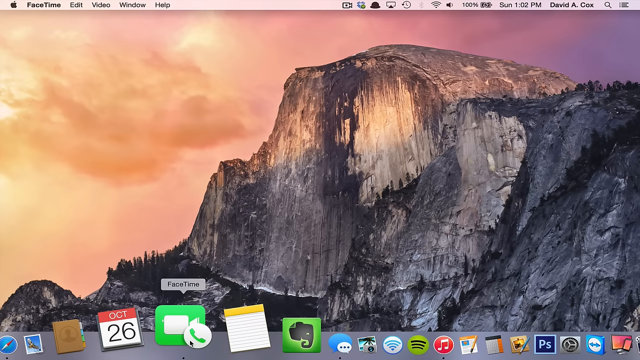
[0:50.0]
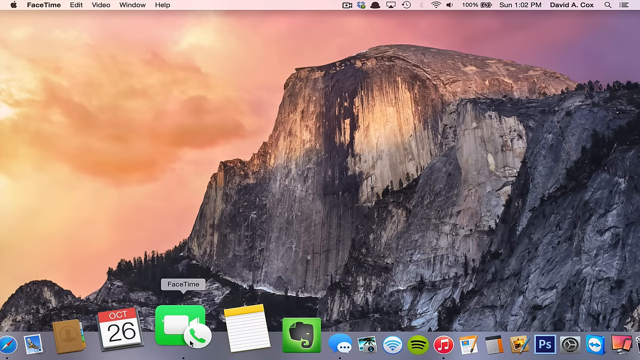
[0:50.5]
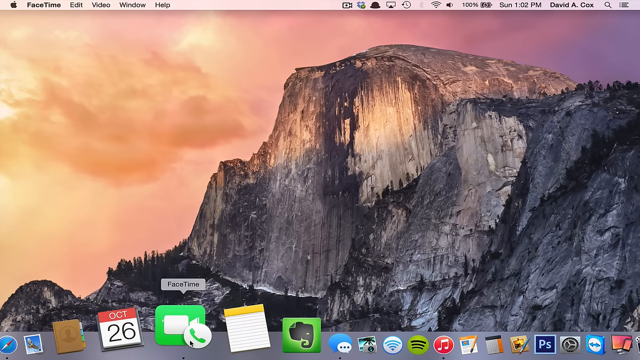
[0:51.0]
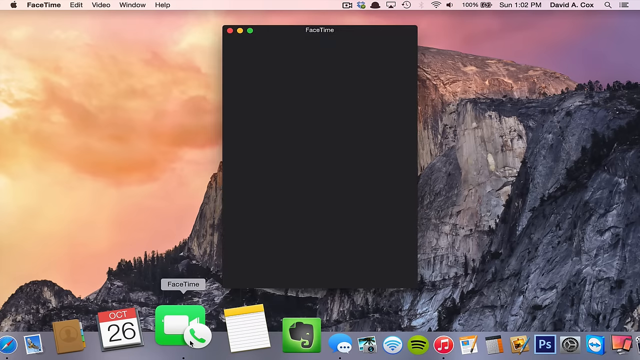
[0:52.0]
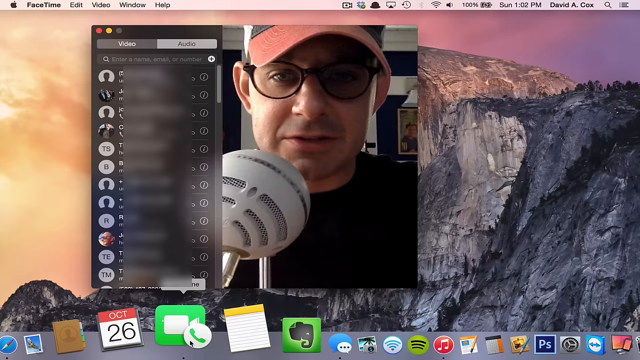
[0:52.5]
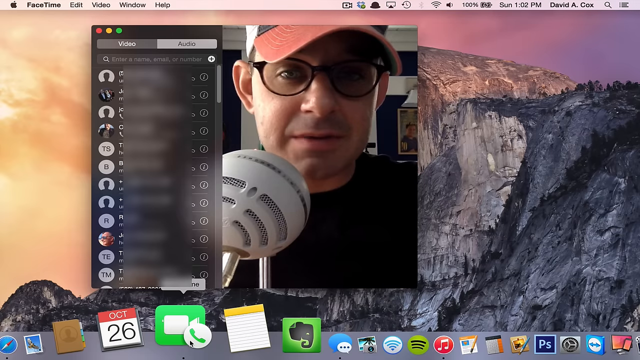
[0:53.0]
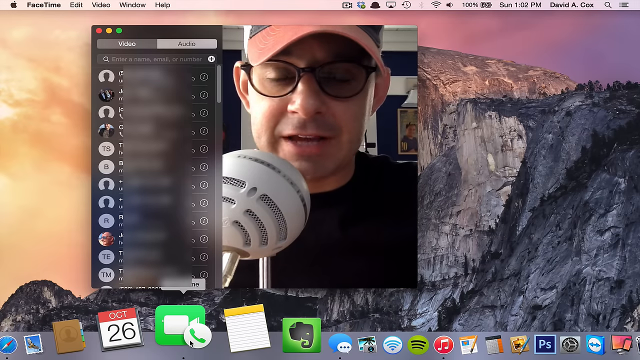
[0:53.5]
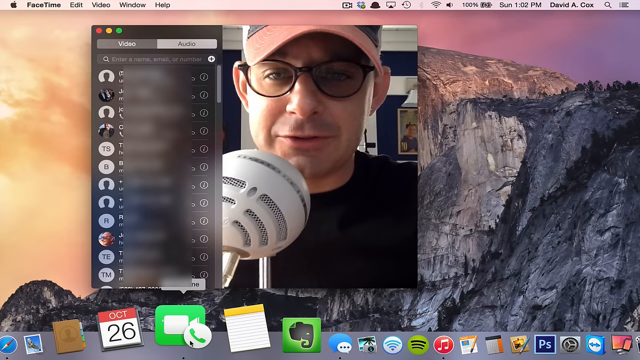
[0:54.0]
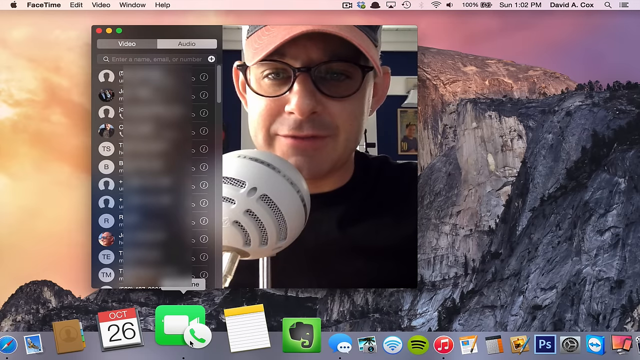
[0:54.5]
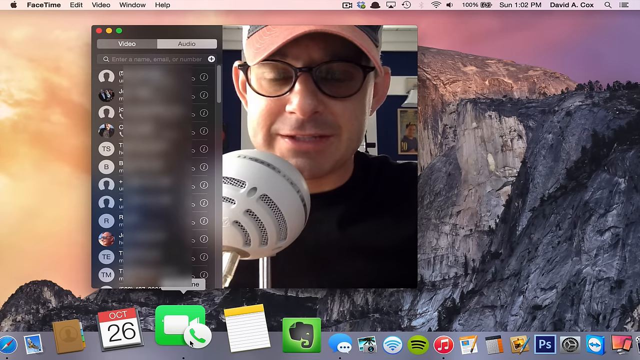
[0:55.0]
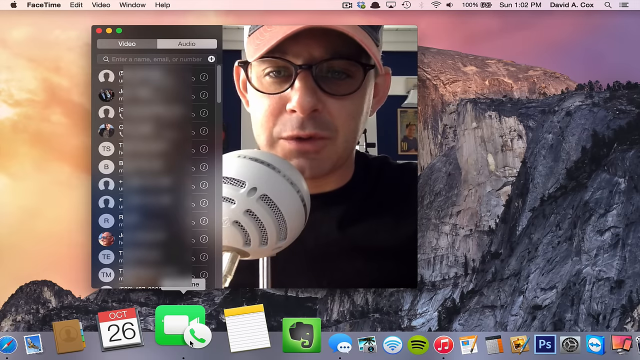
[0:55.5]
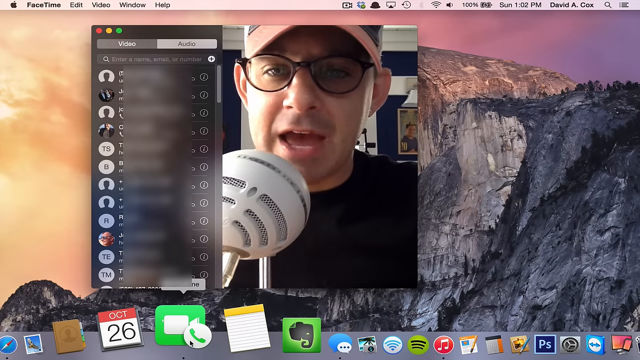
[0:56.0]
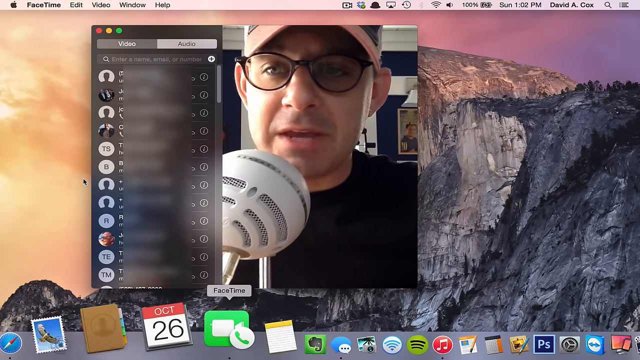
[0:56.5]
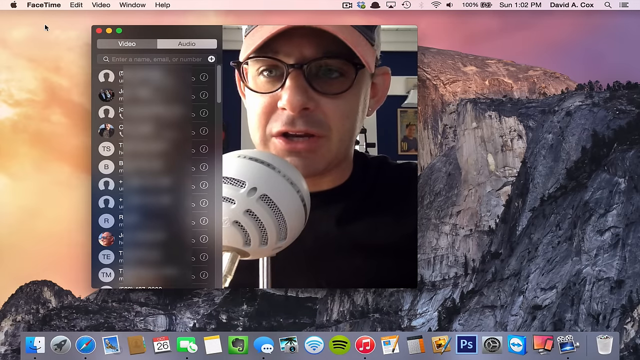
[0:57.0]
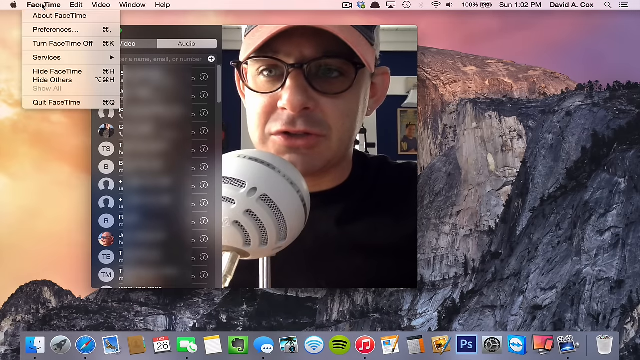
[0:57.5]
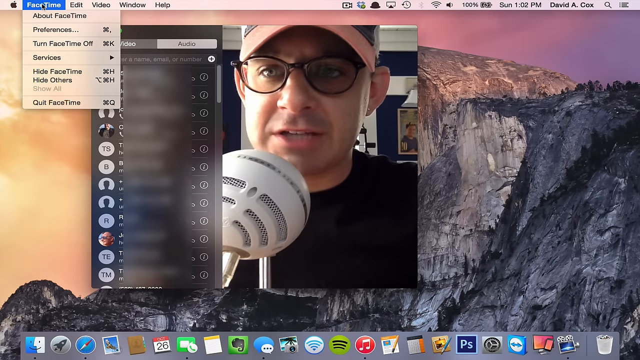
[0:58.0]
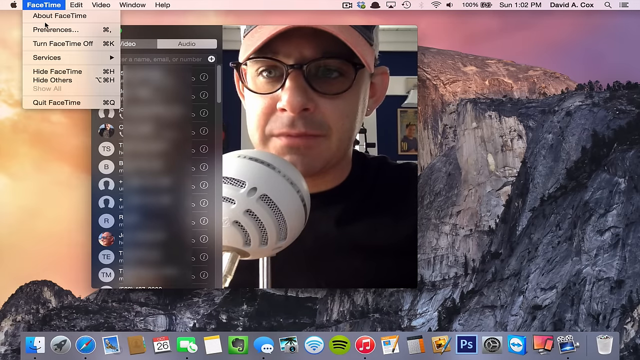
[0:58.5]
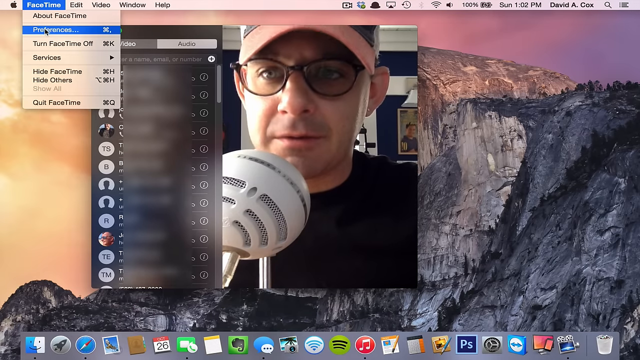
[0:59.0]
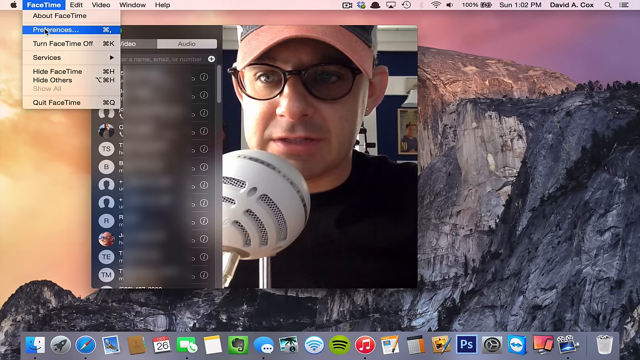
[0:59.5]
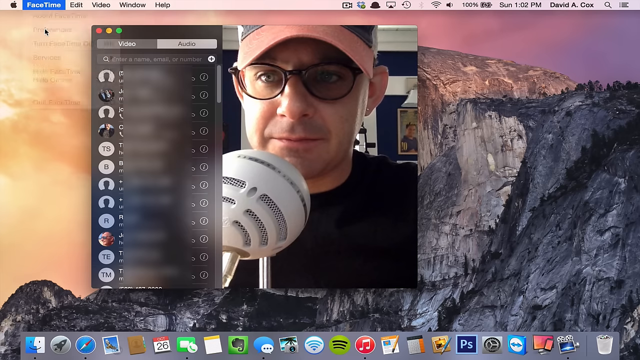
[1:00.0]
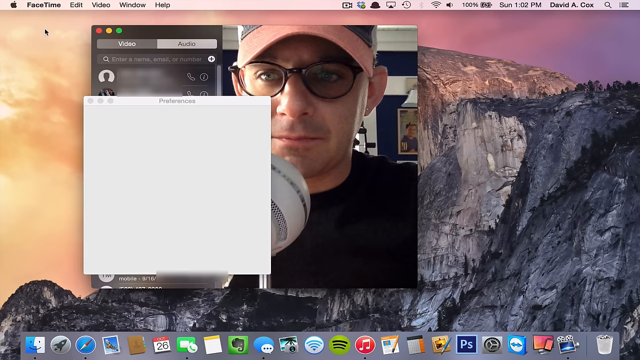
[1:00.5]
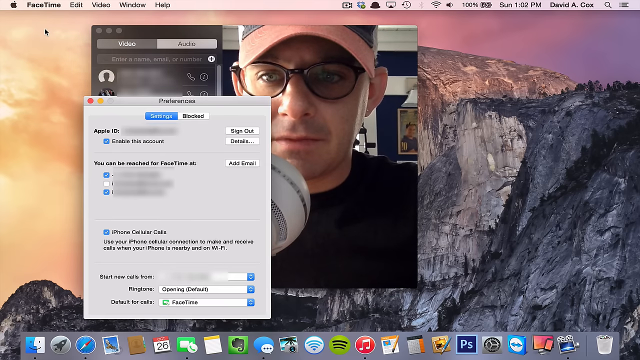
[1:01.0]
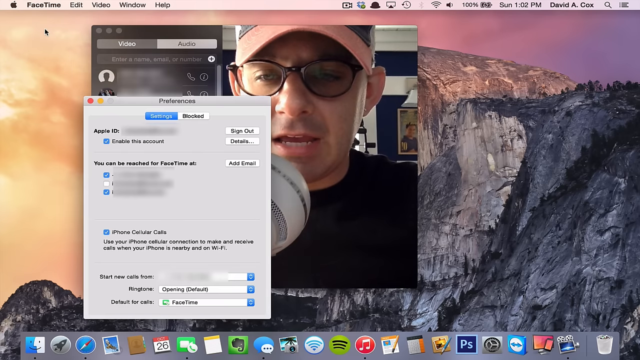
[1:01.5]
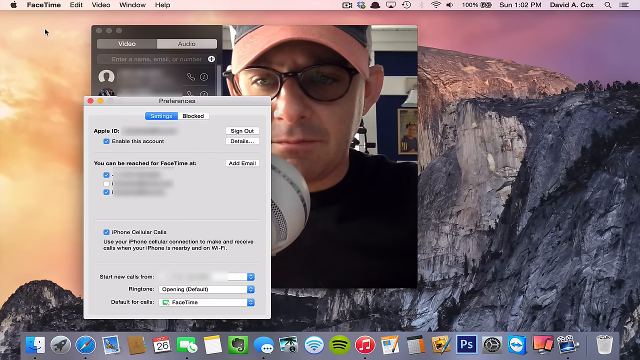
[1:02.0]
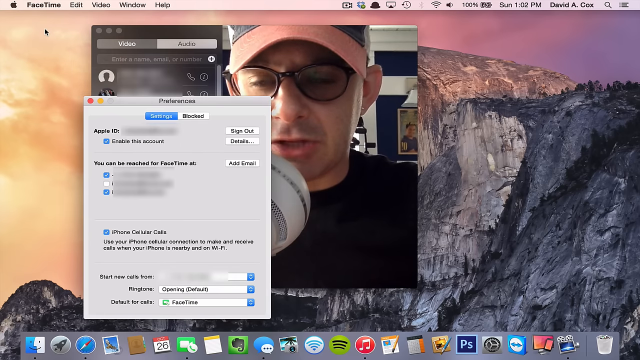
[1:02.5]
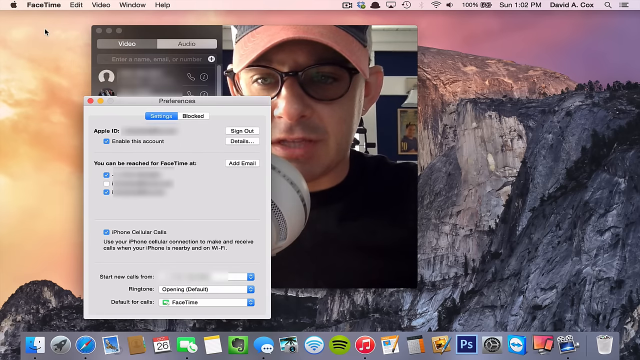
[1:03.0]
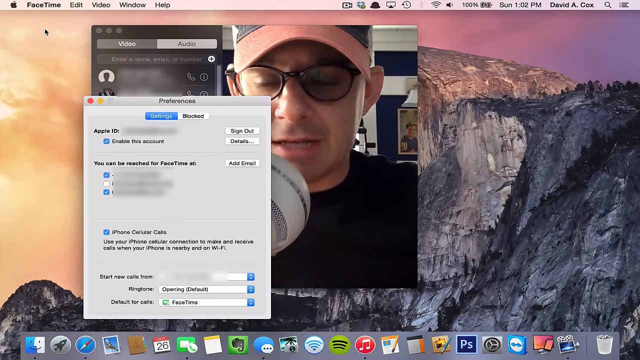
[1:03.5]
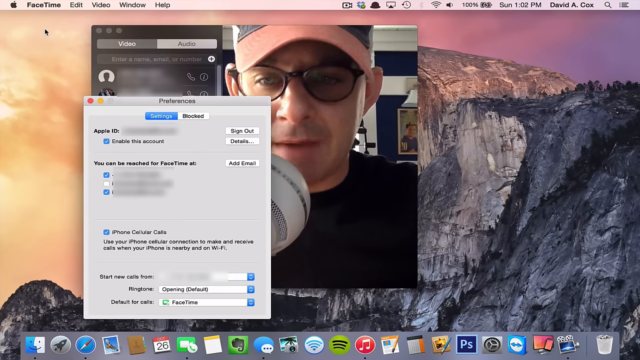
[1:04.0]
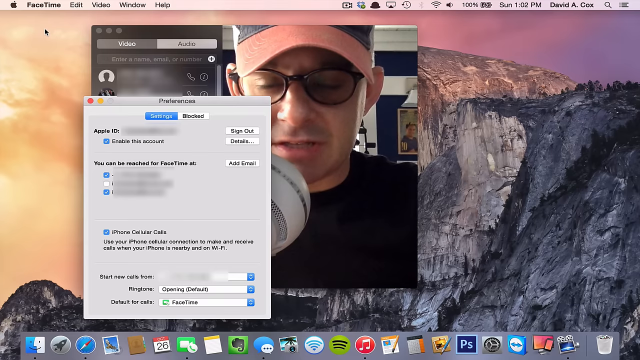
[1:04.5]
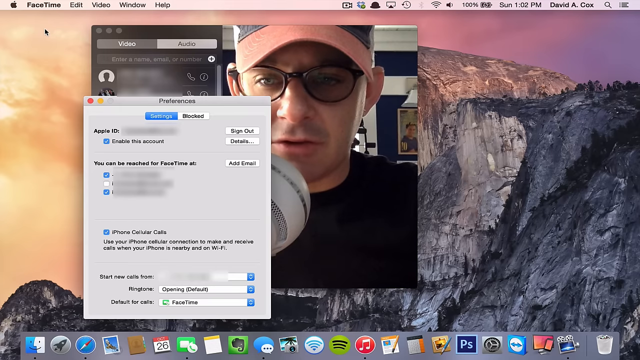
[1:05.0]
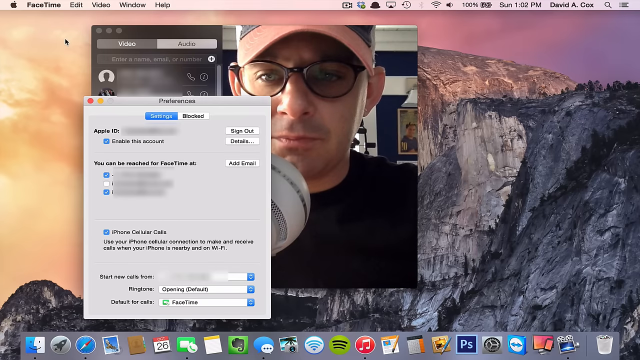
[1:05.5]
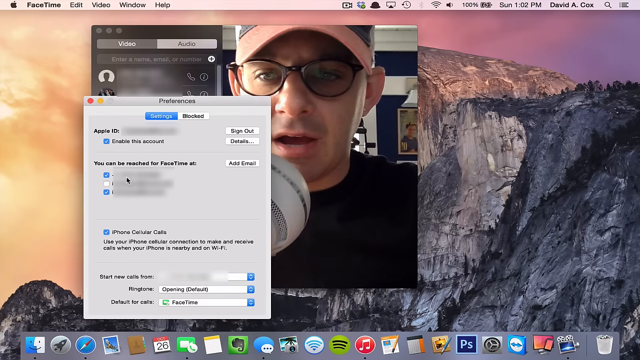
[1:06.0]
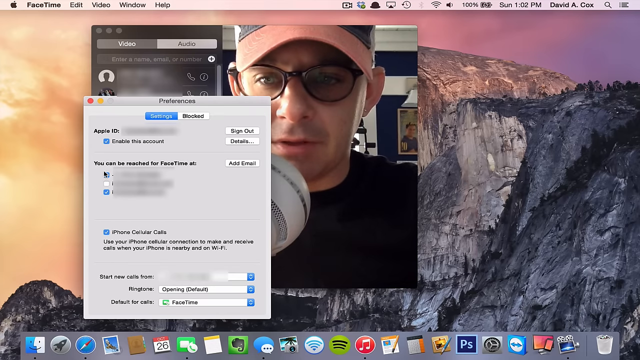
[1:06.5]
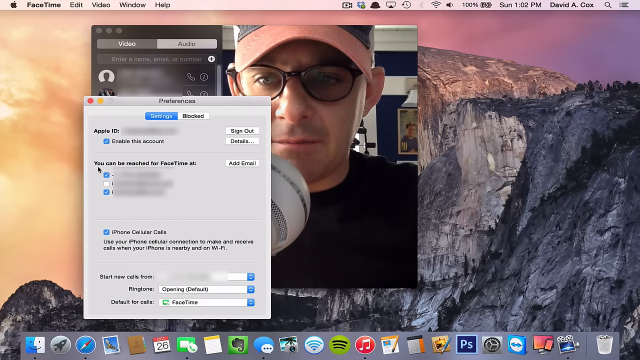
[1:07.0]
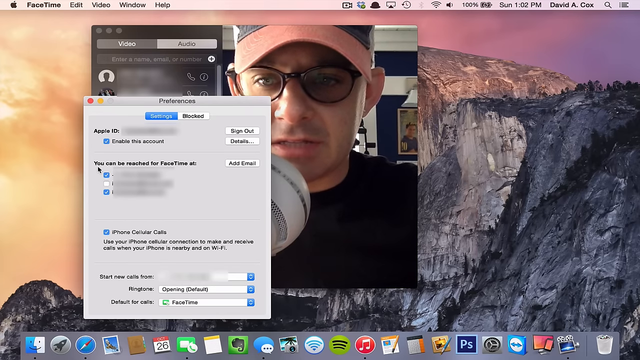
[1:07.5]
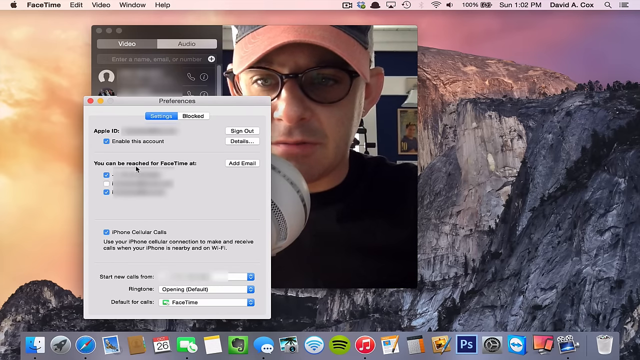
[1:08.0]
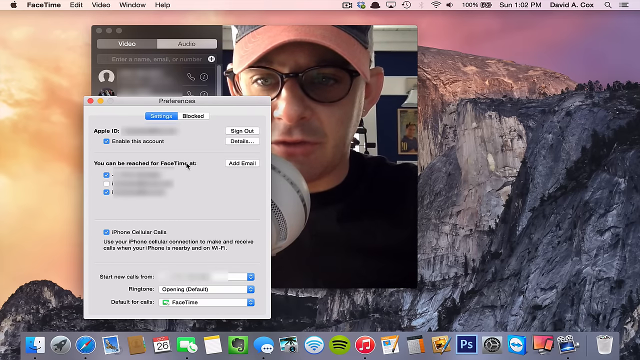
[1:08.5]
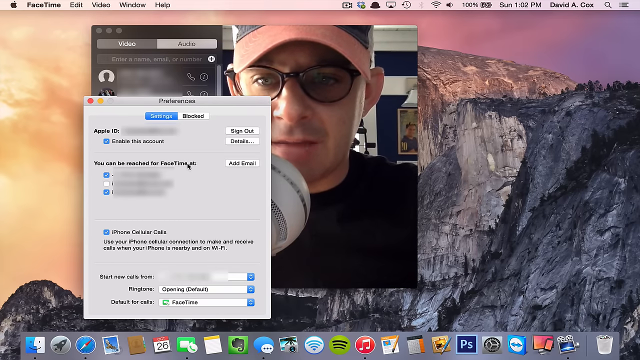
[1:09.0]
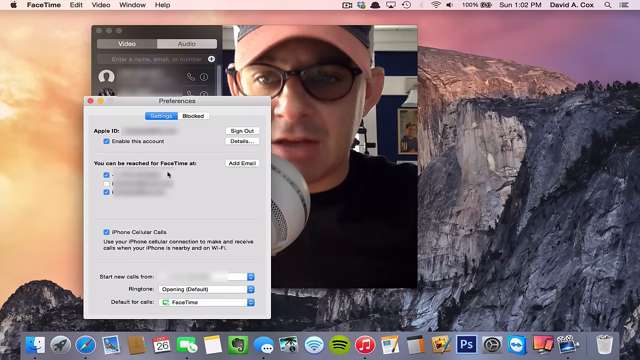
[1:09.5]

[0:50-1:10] The shot starts as a still picture with four apps halfway in the frame: a calendar that reads "October 26th", FaceTime, and two others that cannot be made out. Suddenly a man with glasses and a three-colored hat appears with a really big microphone. His mouth moves as he talks into the microphone, apparently recording a podcast, and he looks quite confident. While talking, he uses an Apple computer, opening something for FaceTime, then makes a few other clicks. He shows his screen and does something with FaceTime.